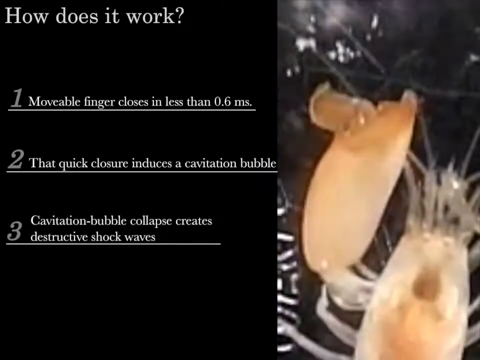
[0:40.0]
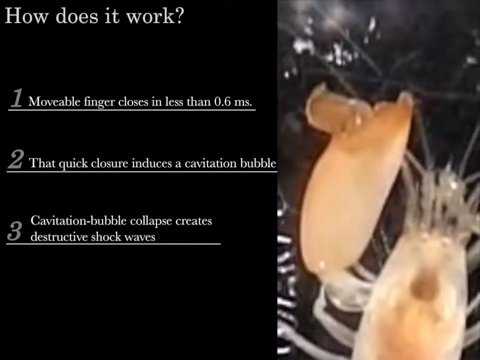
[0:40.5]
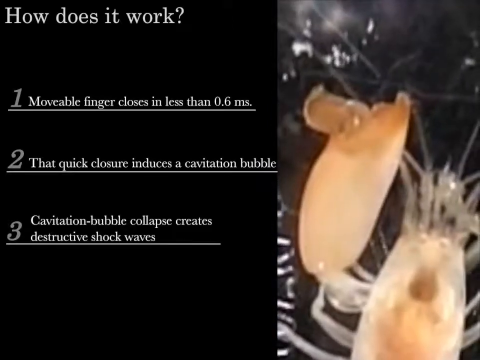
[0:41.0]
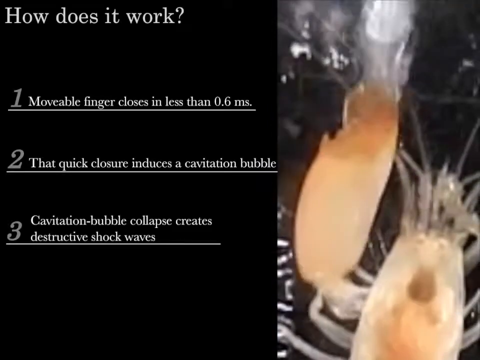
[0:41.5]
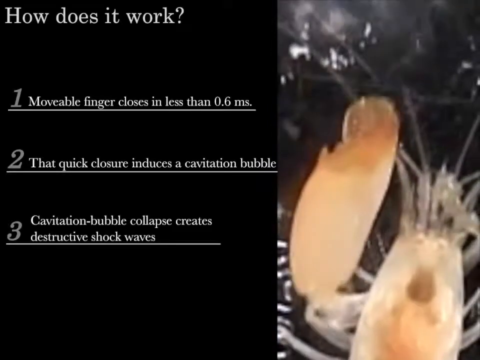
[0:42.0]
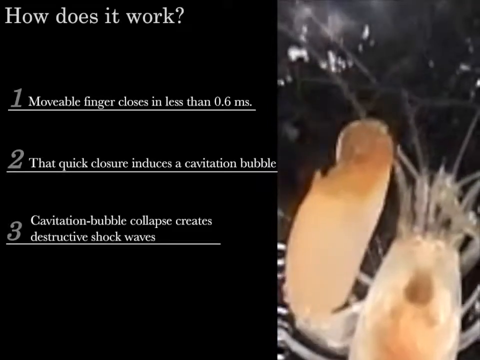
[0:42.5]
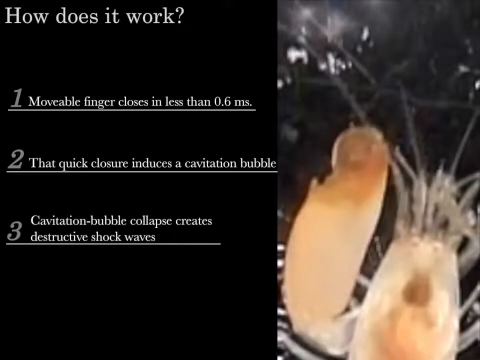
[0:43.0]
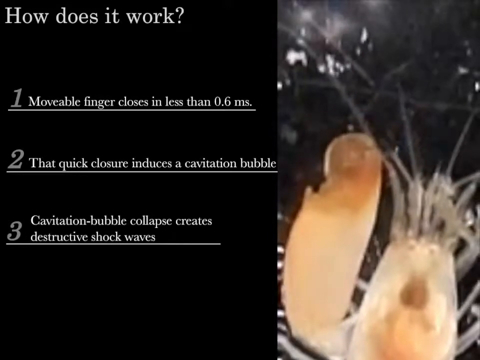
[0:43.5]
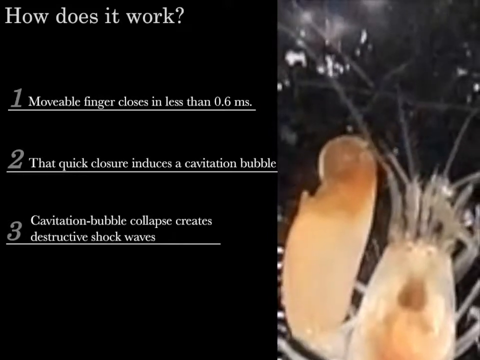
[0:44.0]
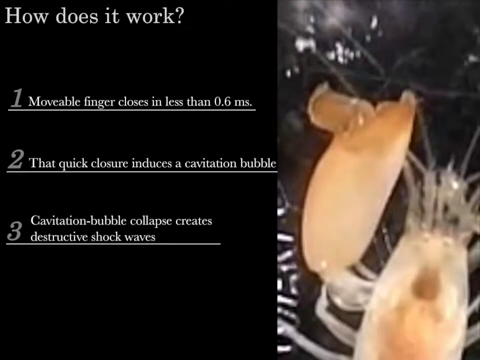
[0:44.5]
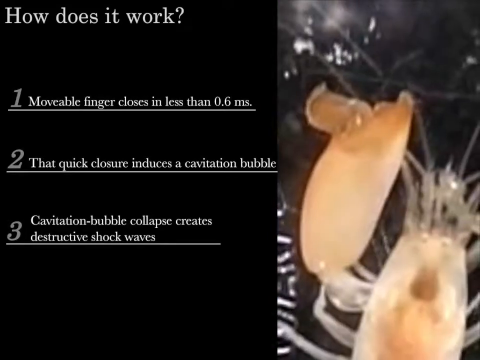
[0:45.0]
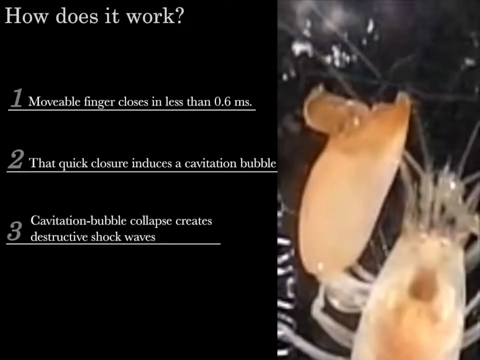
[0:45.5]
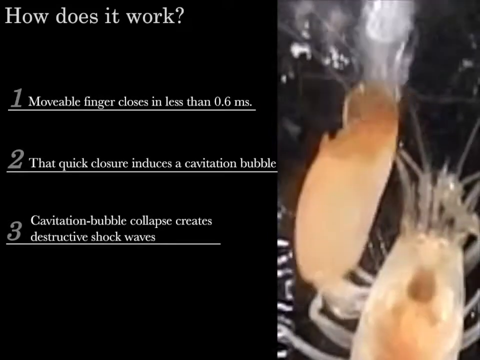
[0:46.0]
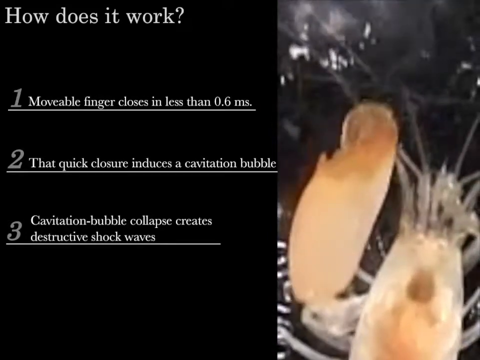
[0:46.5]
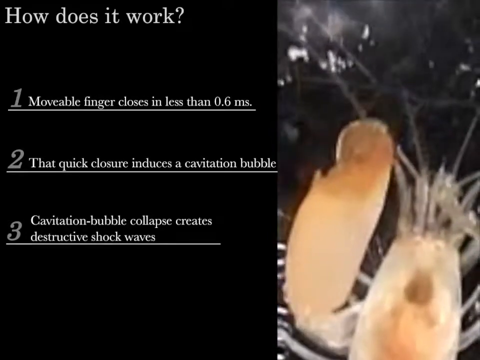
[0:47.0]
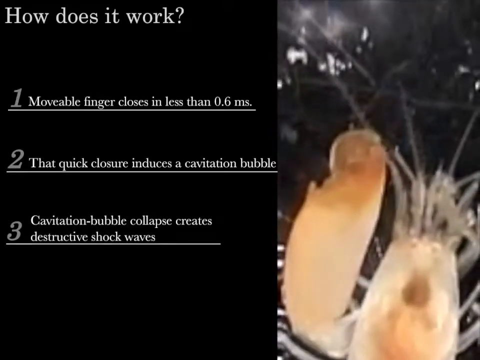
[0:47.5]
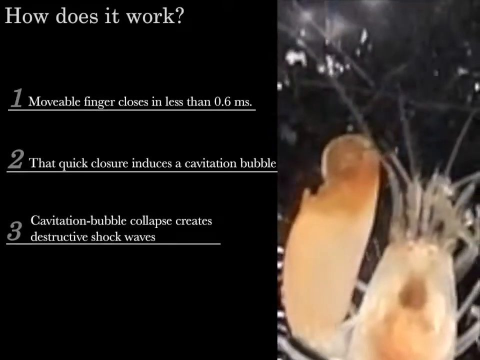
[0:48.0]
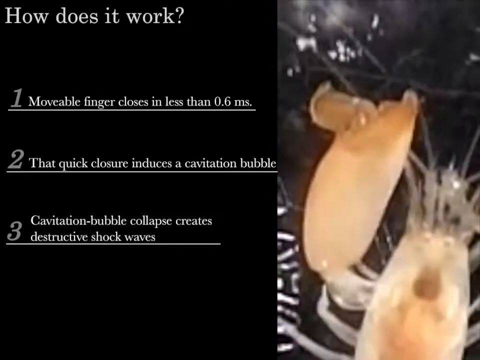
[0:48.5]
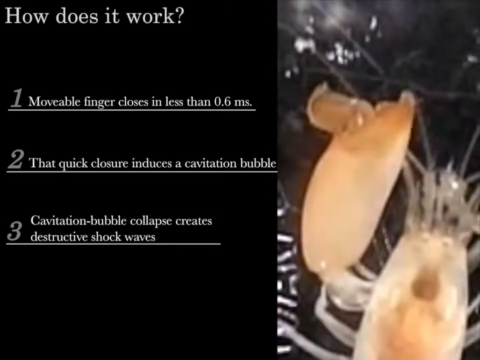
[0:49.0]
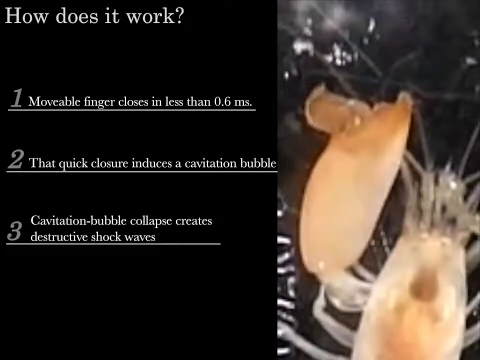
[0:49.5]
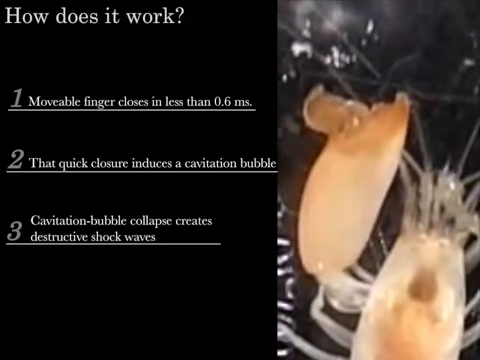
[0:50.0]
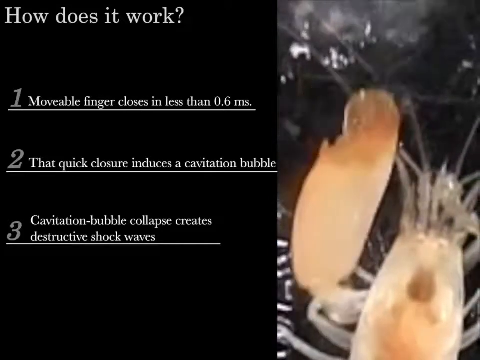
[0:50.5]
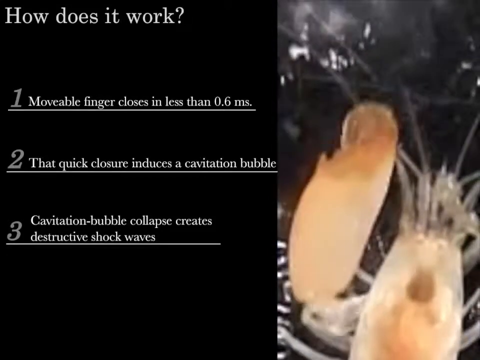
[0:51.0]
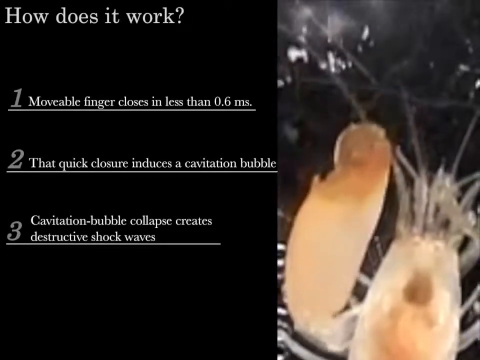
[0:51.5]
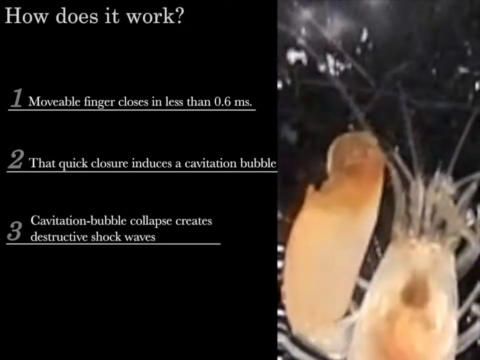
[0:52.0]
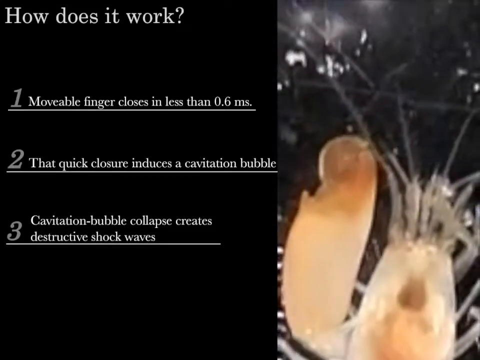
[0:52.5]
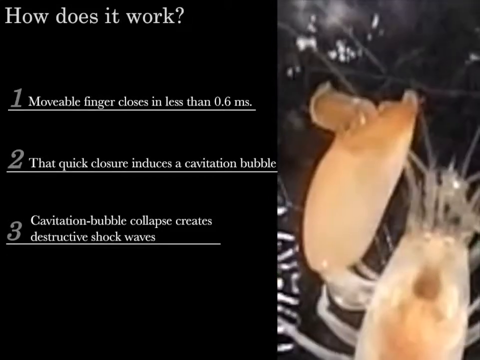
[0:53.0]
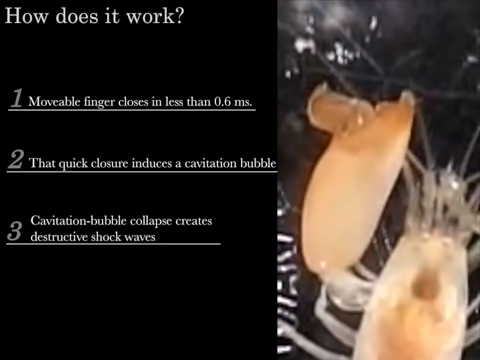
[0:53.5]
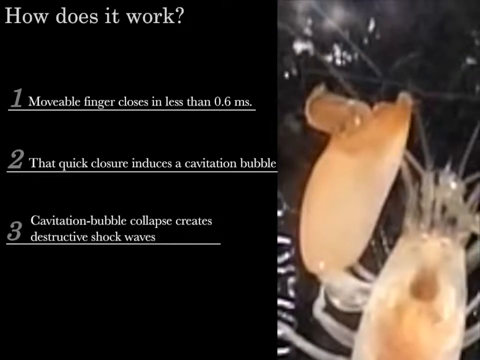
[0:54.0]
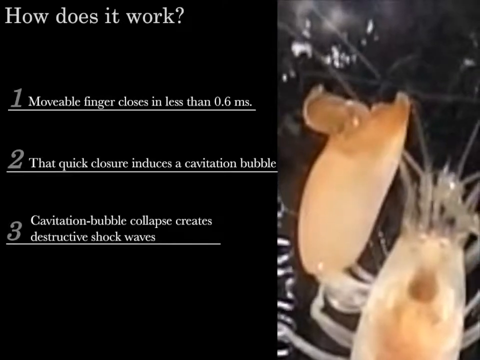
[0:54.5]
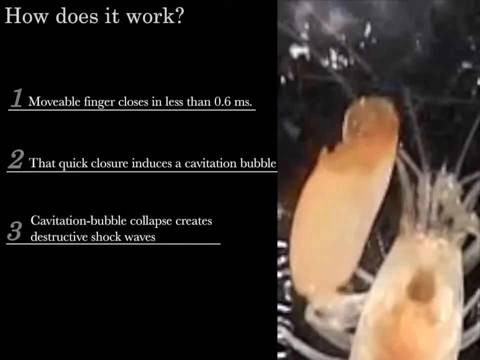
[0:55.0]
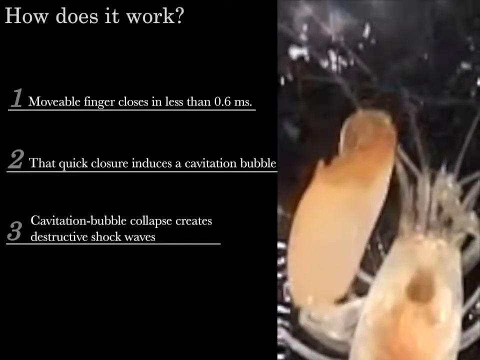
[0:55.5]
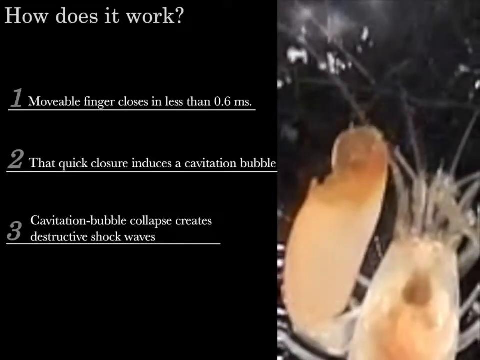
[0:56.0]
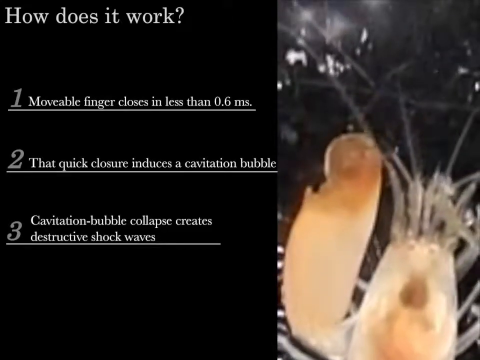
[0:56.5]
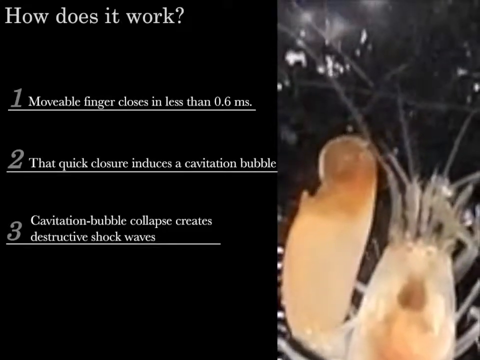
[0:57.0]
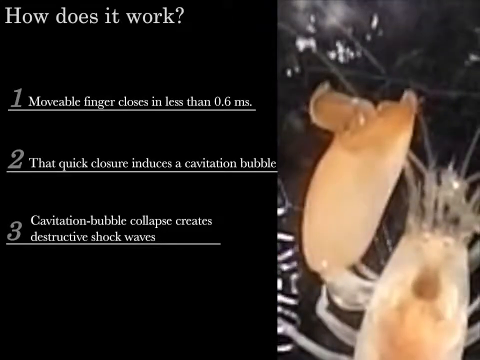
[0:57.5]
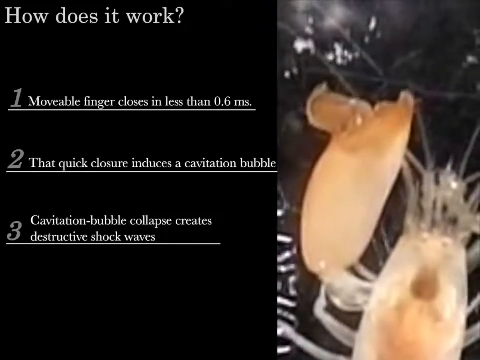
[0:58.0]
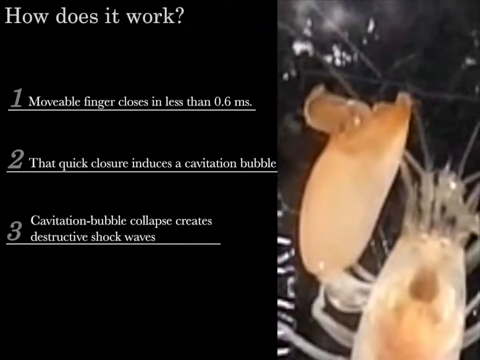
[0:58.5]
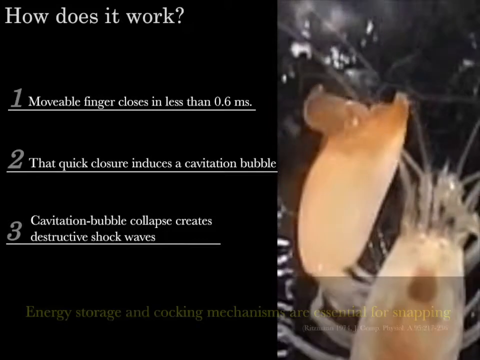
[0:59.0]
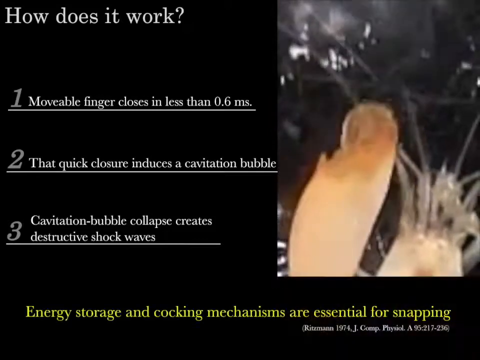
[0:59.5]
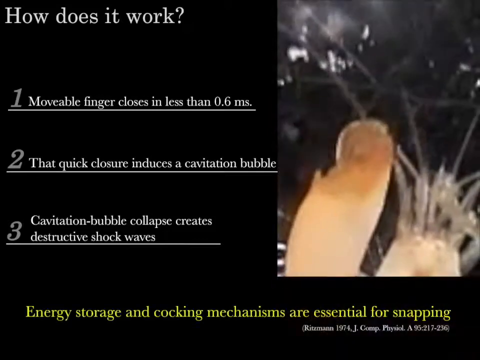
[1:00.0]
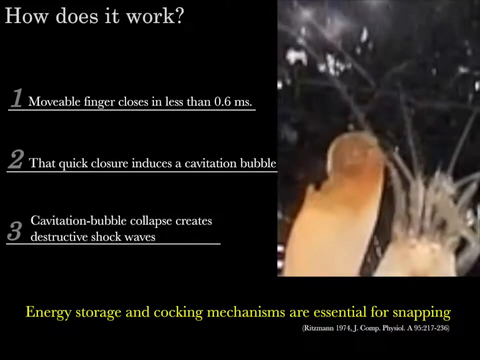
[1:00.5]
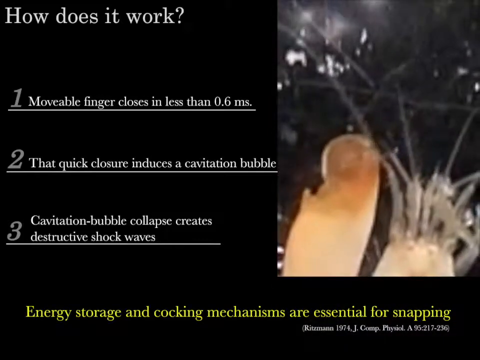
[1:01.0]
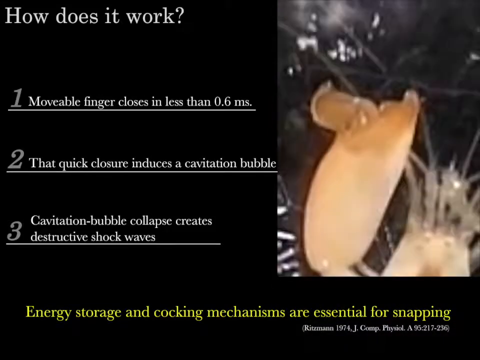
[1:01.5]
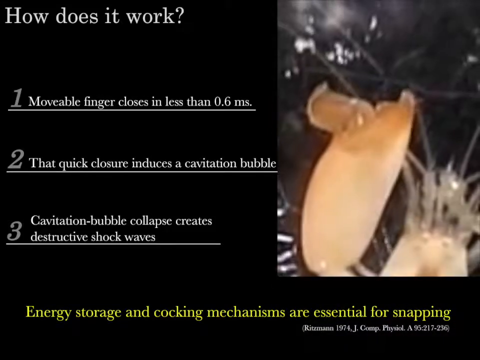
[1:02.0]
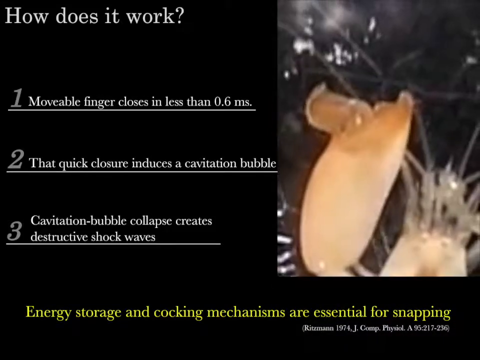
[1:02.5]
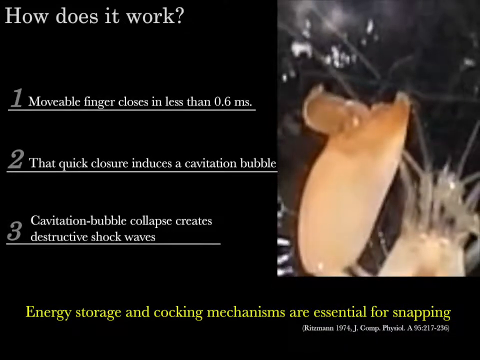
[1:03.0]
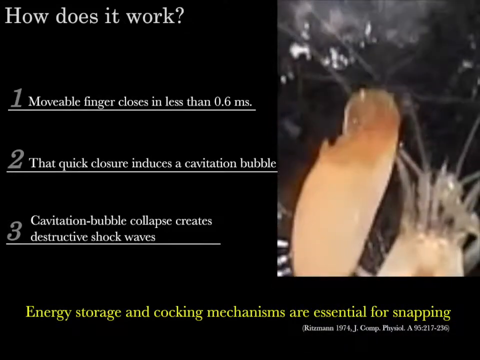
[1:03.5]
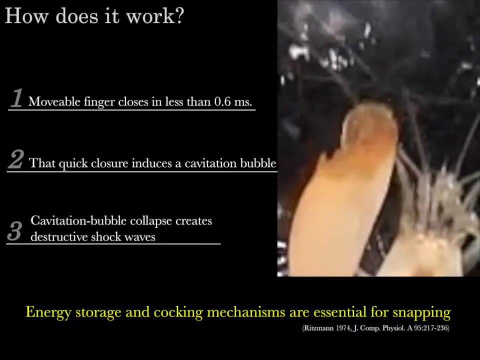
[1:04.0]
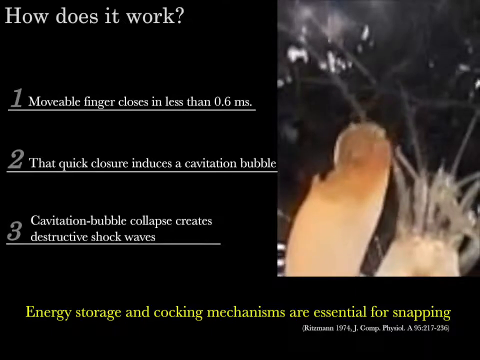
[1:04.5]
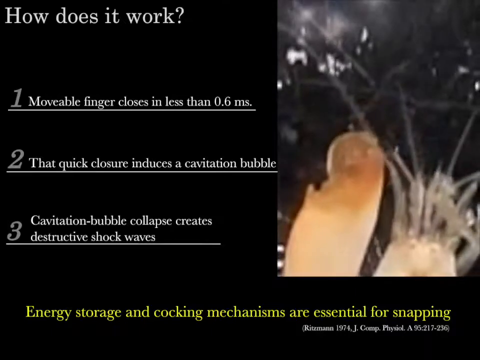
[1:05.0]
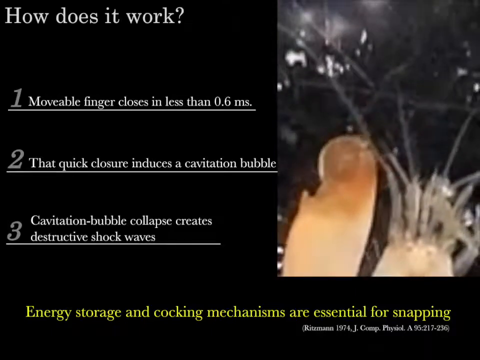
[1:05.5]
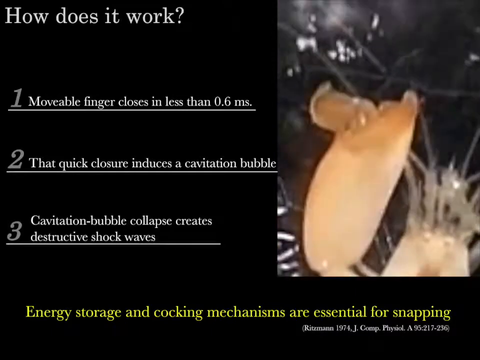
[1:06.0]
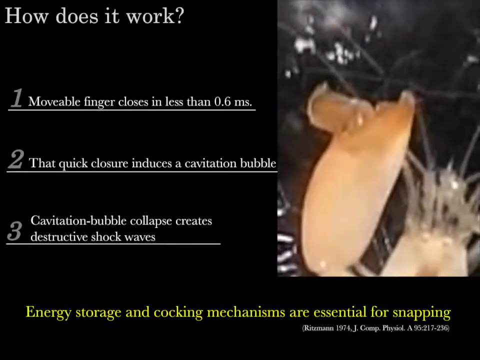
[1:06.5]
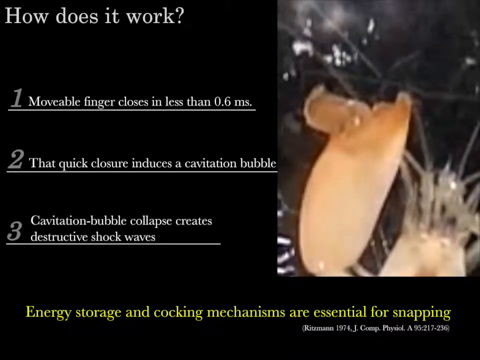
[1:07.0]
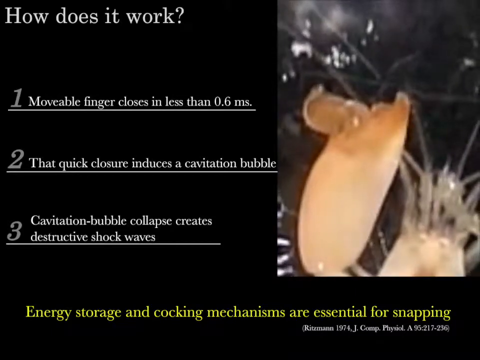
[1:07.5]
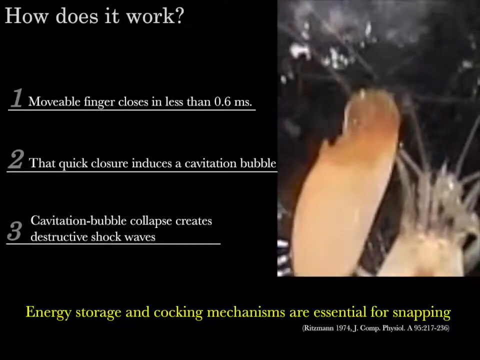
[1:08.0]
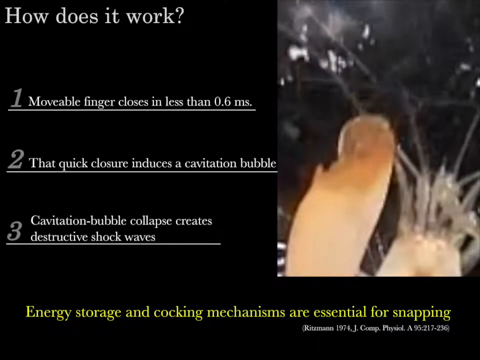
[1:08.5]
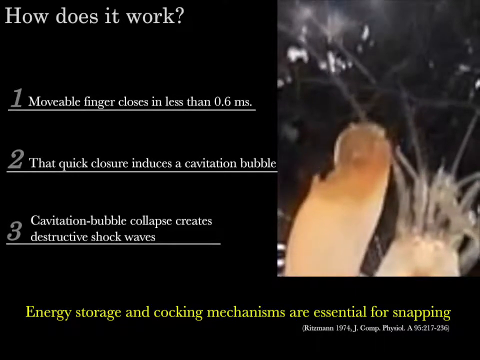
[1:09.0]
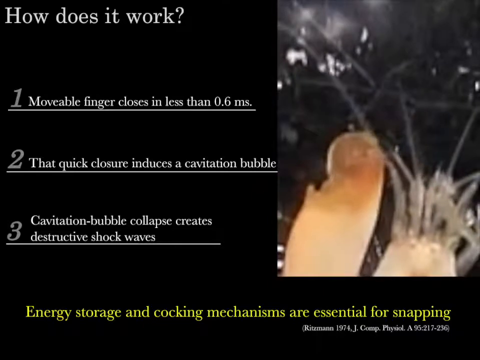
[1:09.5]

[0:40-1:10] The shrimp that looks like a crayfish is still on the right side; only the top of its head is visible, coming up from the bottom just in from the right corner. Its big claw extends up from the left of its body, opened wide. It does not have the normal really long, jagged claw; this one is shorter, with just little pincers at the tip. On the left side, on the black background, the top reads "how does it work?" Below it, number one reads "movable finger closes in less than 0.6 ms", number two reads "quick closure induces a captivation bubble", and number three reads "captivation bubble collapse creates destructive shock waves". All of them are underlined with a white line. An object comes in toward the shrimp again and it snaps its claw shut, then extends it back out. The object comes in from the top left again, extremely fast and hard to make out, but the bubbles in the water can be seen moving as it goes toward the claw; the claw snaps again, extends back out open, and snaps again as the object comes down. Every time it snaps, the water bubbles and some debris kicks up a little on the bottom. The bottom is a blackish color. Its little antenna runs across the top of its head, and in the center of its head is a little round orange speck. Yellow text then appears across the bottom reading "energy storage and cocking mechanisms are essential for snapping", with fine print in white underneath, as the claw continues to snap at whatever comes in from the top.